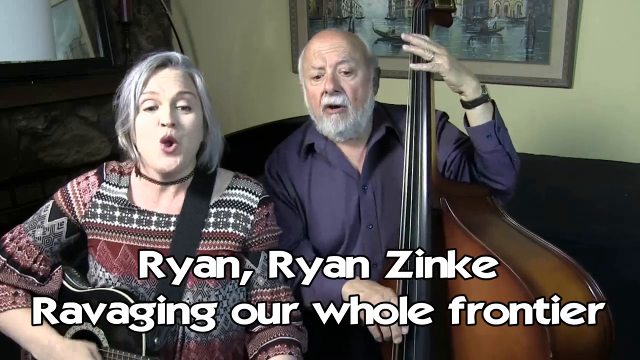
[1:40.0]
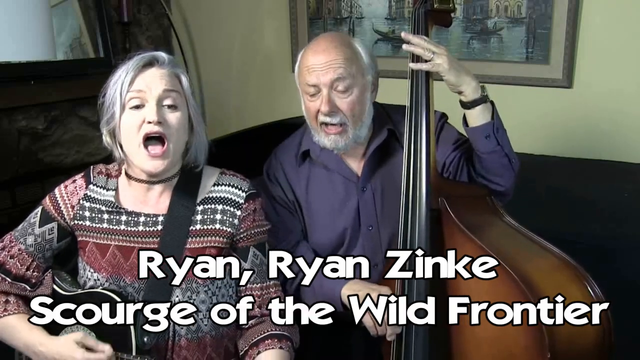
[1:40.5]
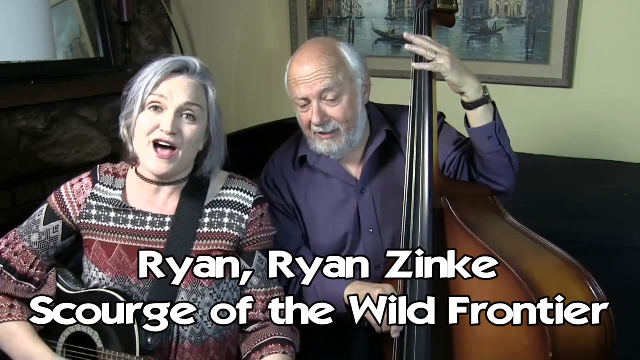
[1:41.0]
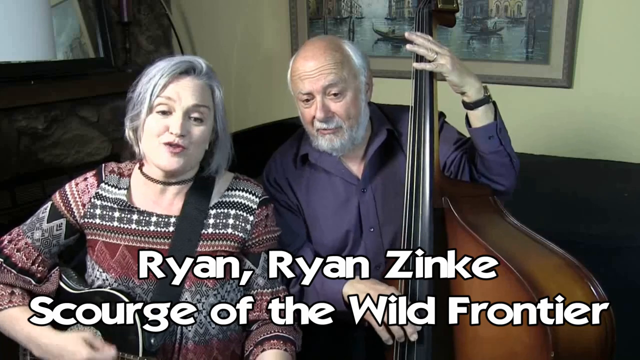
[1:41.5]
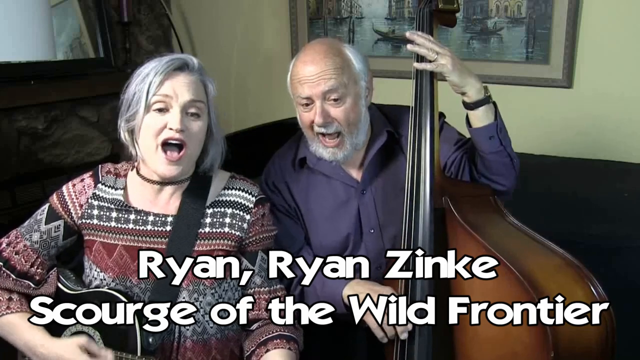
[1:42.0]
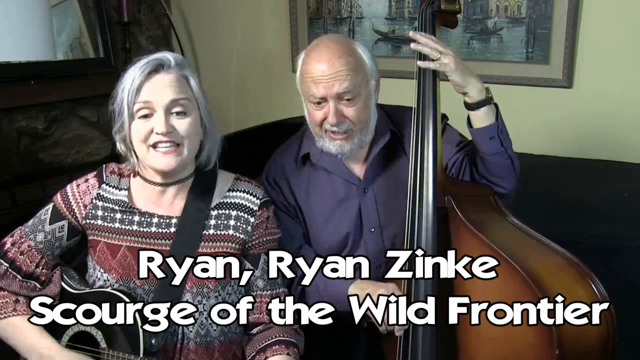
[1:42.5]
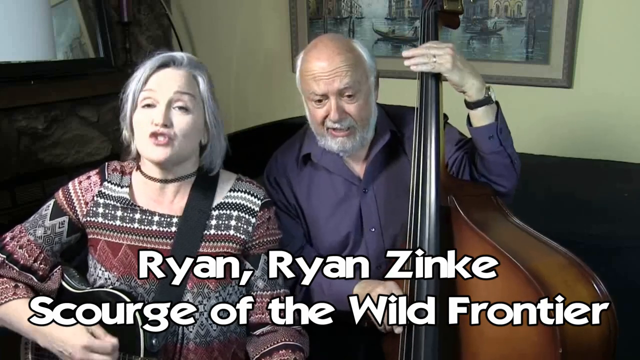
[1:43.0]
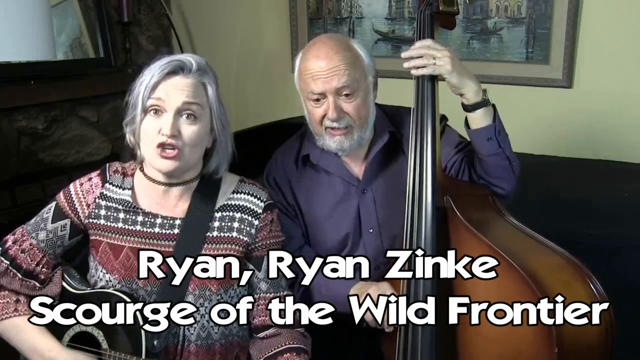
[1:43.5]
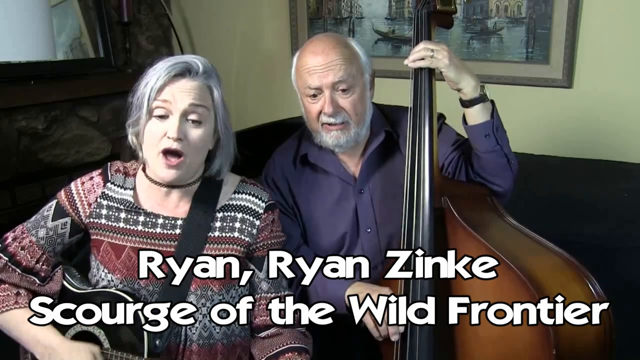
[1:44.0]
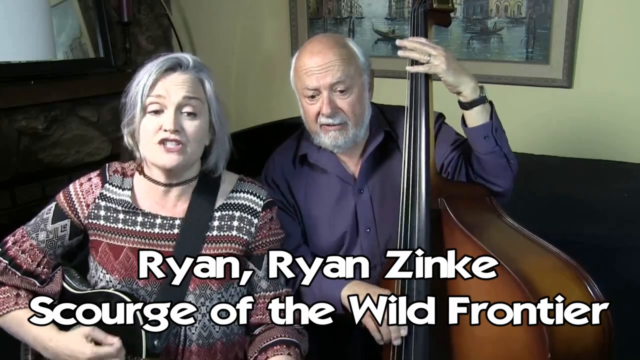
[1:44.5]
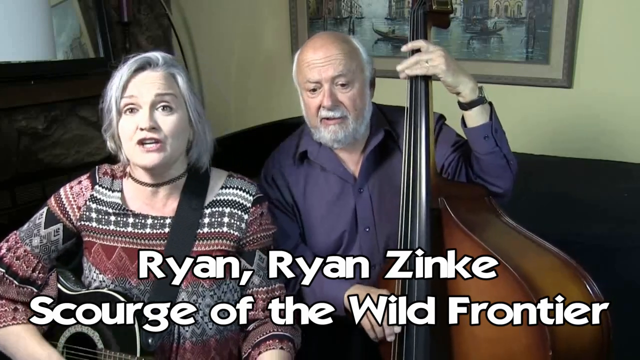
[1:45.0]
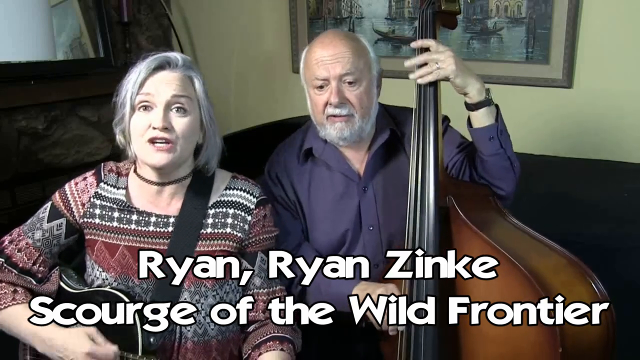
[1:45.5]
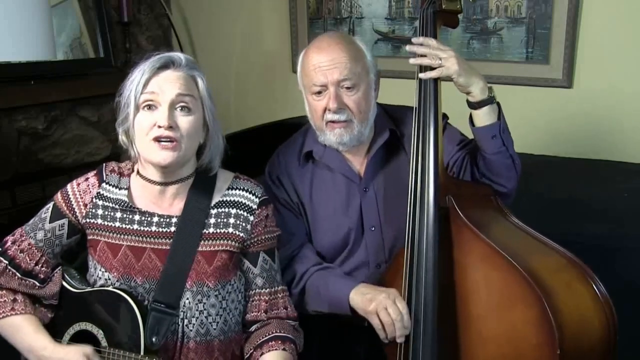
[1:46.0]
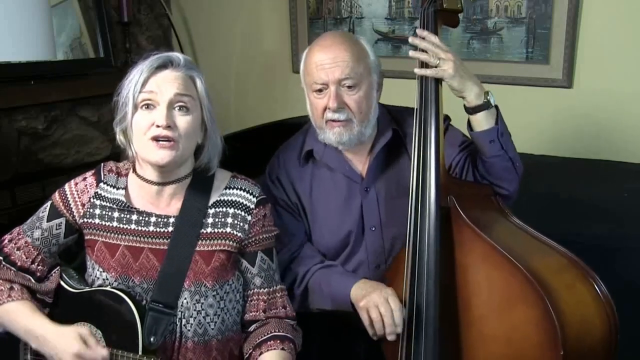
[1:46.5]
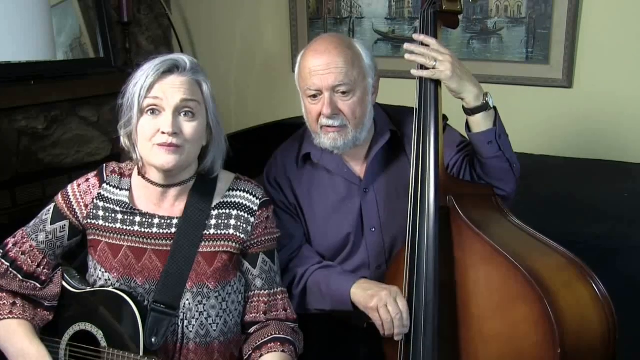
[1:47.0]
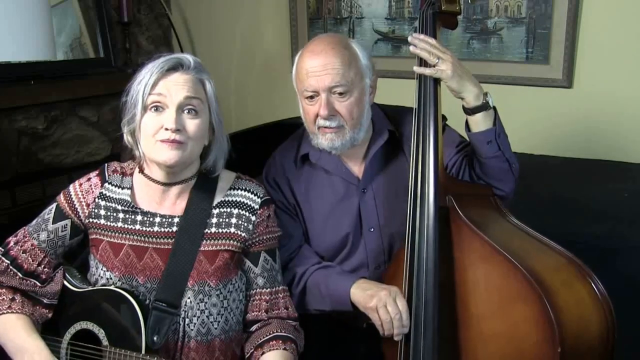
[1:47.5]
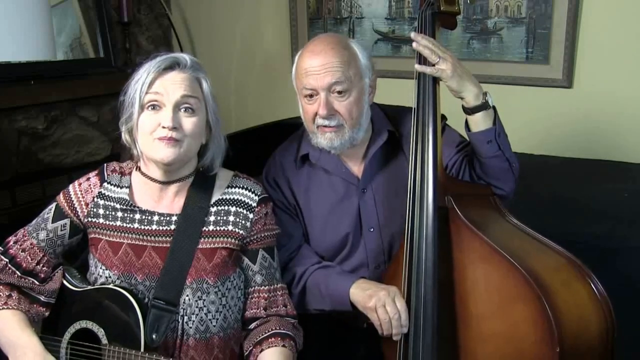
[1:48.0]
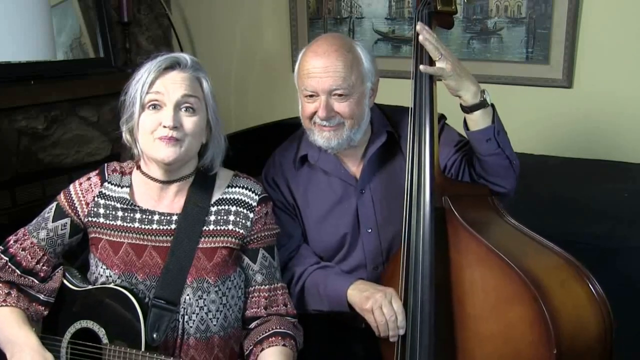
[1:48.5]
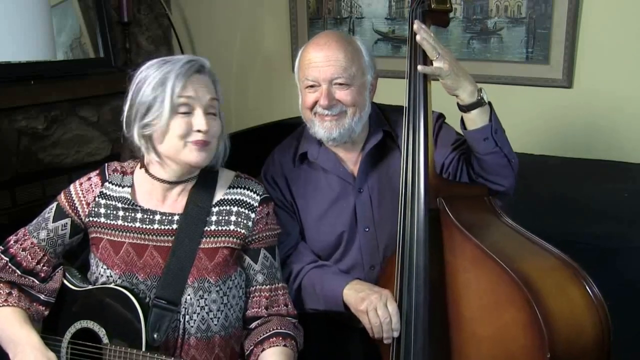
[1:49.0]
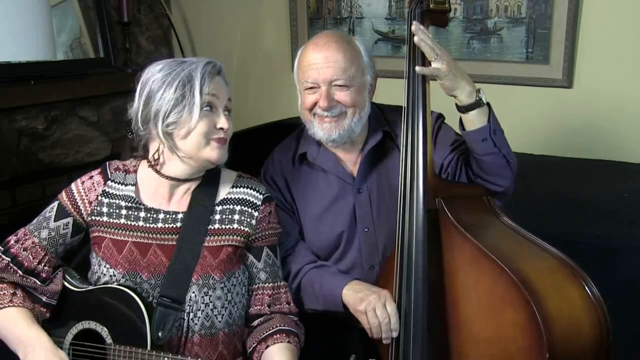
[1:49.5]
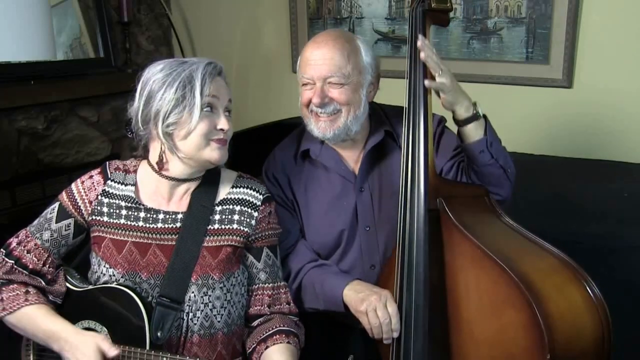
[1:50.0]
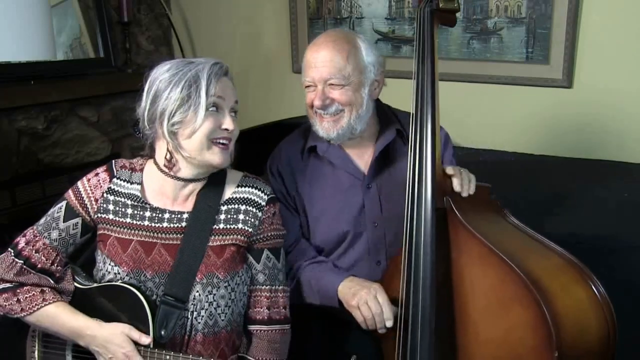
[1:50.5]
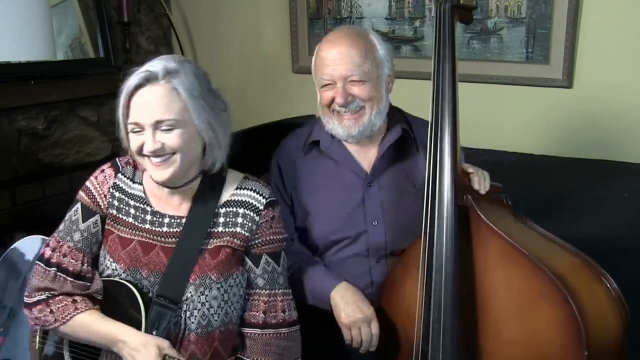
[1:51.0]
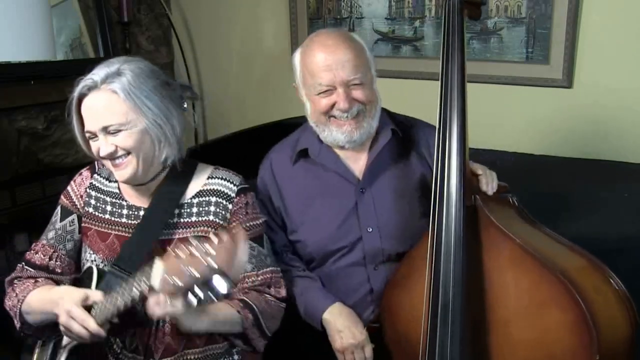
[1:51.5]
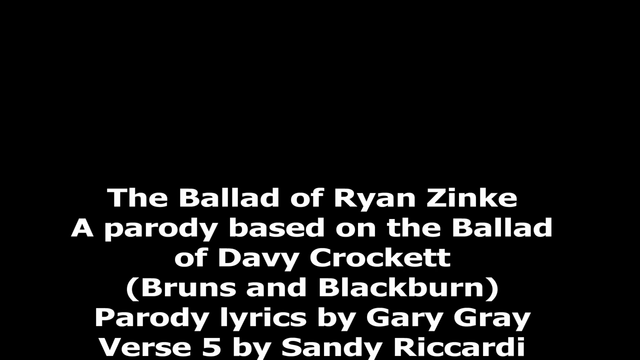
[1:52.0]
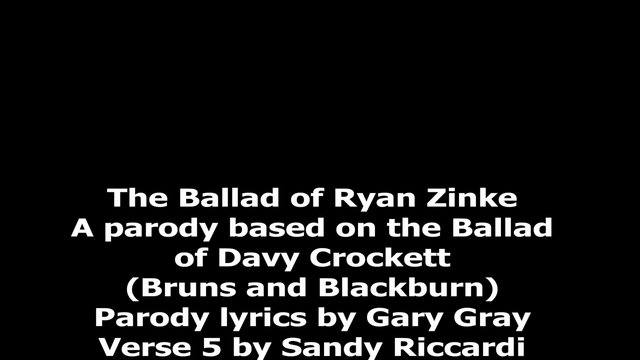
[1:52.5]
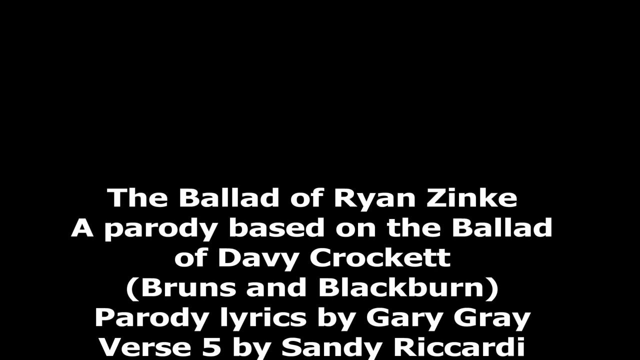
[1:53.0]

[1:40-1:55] The subtitles read "scourge of the wild frontier". The man still wears his lavender button-down shirt and black watch on his left arm, which is raised above his head as he plays the stand-up bass. The woman still wears the same multicolored Albuquerque/New Mexico-style shirt, with silver hair, a black necklace and brown earrings. They are in the same setting with the cream teal wall, a picture on the wall and a window to the left. It seems the song ends here: they stop singing, look at each other and laugh. End credits follow, reading "The ballad of Ryan Zinke, a parody based on the ballad of David Crockett" and "parody lyrics by Gary Gray", with names including Blackburn in parentheses. The credits have an all-black background with all-white text.